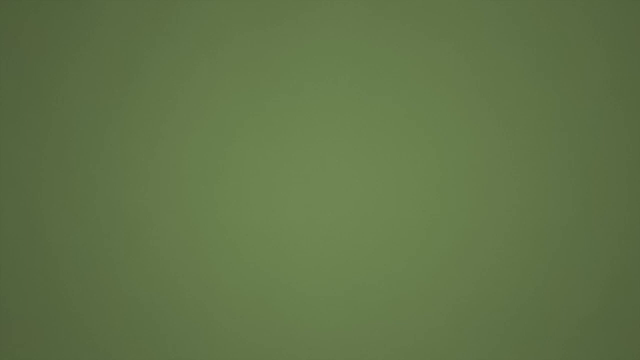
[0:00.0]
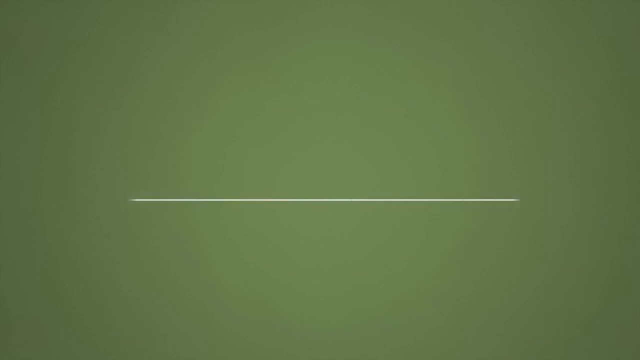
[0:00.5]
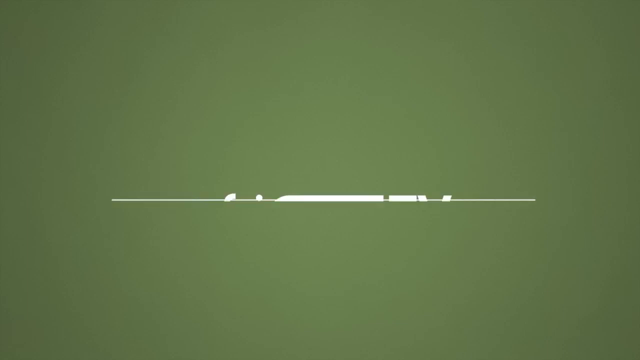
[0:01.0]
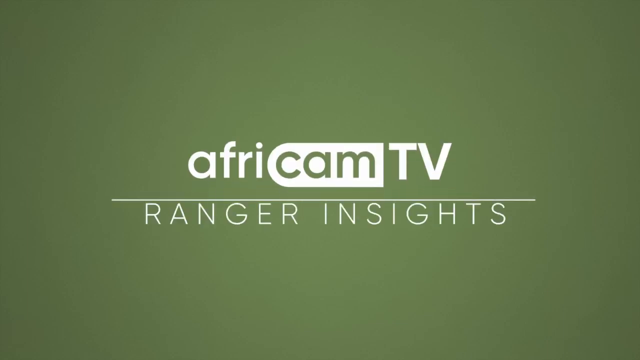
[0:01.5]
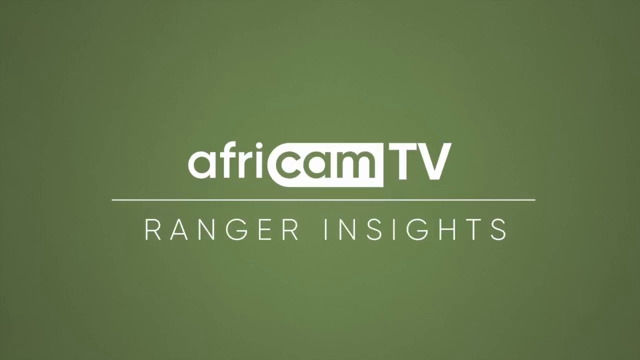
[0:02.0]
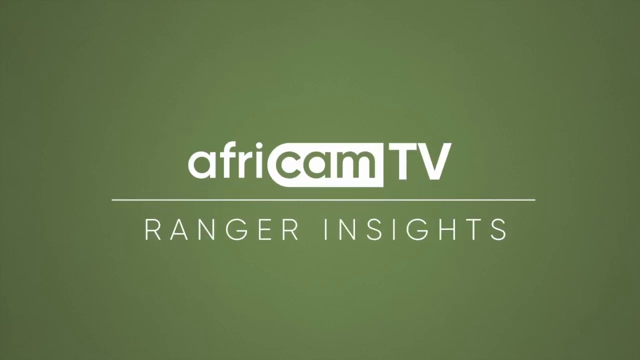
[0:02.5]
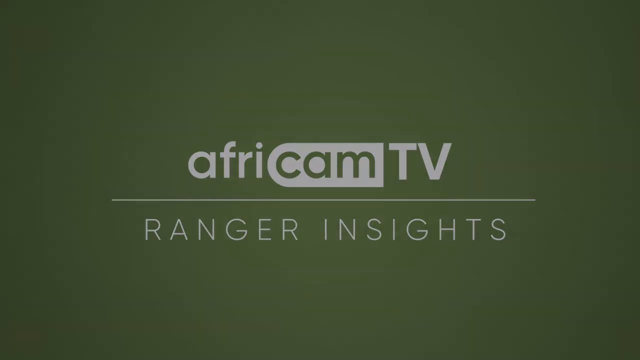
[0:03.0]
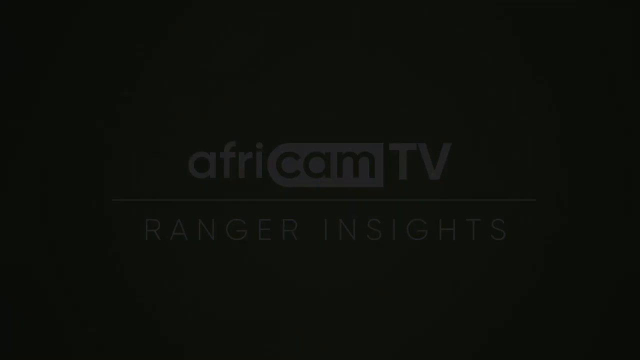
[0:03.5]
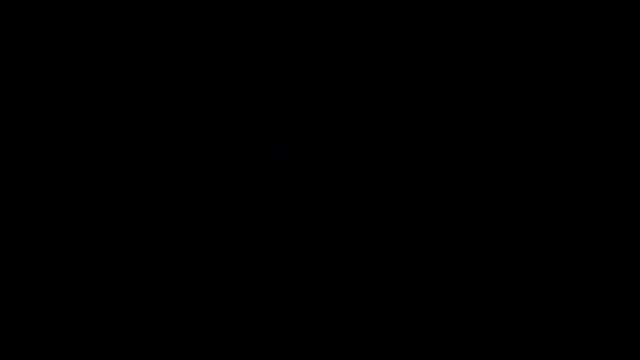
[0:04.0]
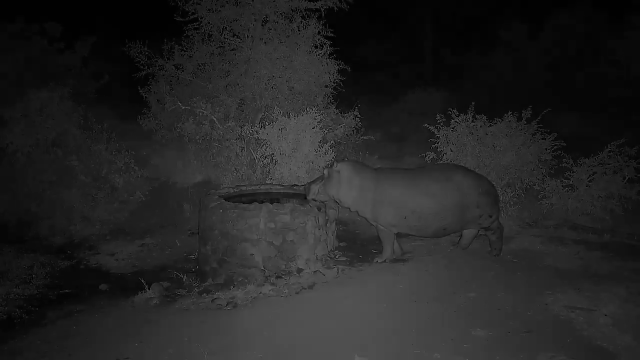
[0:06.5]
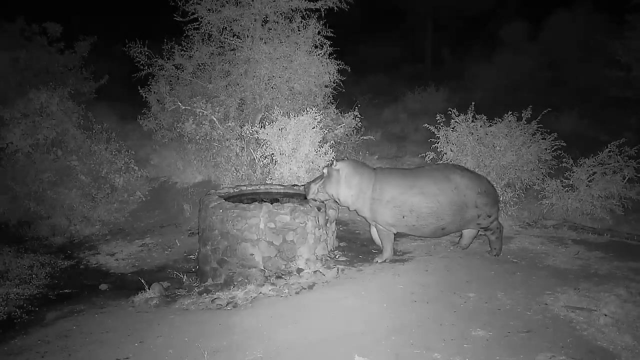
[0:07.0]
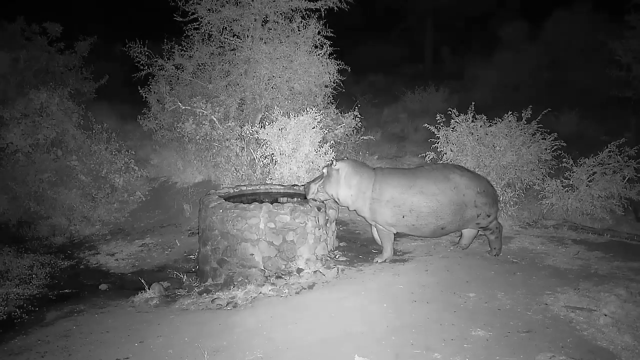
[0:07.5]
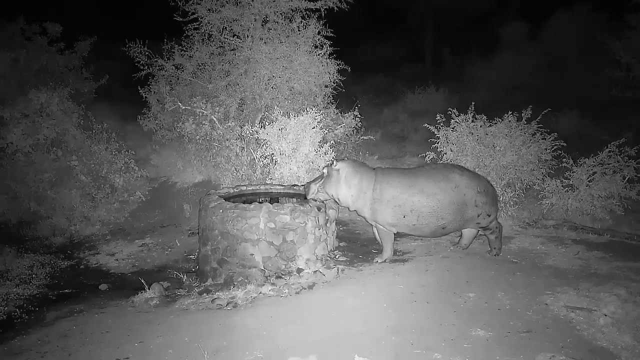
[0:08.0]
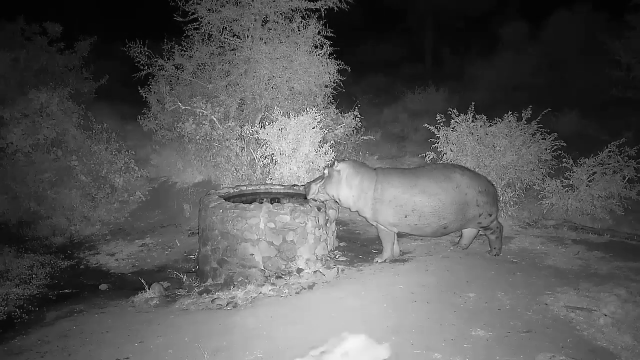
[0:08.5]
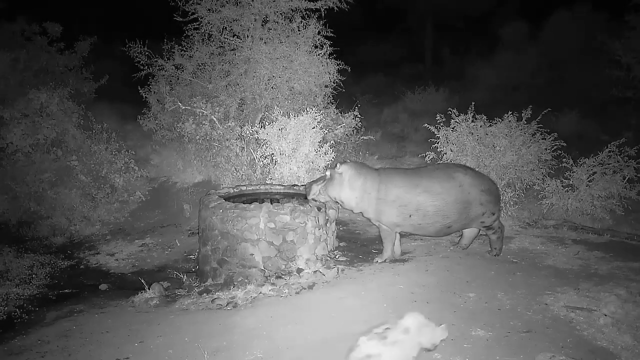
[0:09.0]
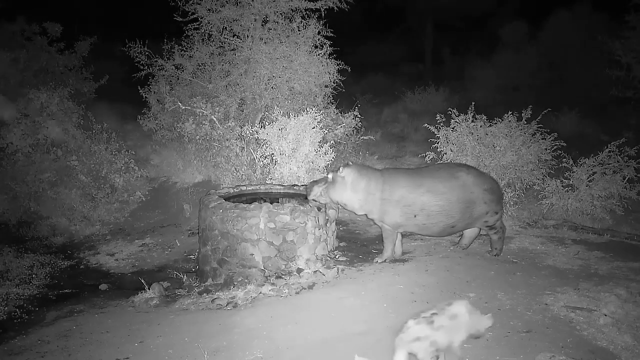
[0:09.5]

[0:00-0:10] The video opens on an avocado-colored background with words written on it, beginning with "African". A hippopotamus then appears beside a tank built of stones or cement that holds water, and the hippo is drinking or trying to drink from it. Trees are in the background, and the setting seems to be a forest or a zoo where the animals stay. The footage is black and white. A light faces straight at the tank of water where the hippo is drinking. The tank is small, with a small design and low height. Another, smaller animal comes walking in.